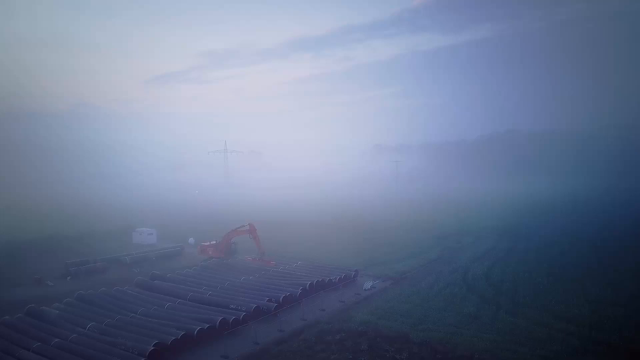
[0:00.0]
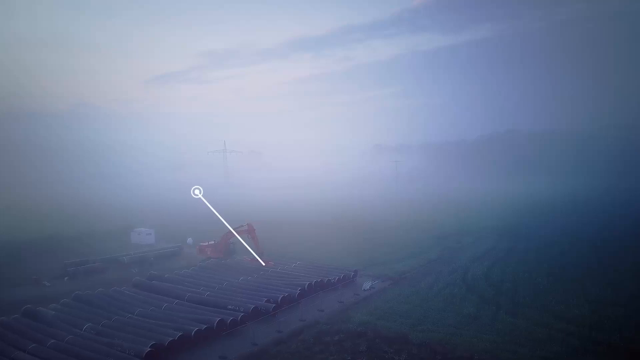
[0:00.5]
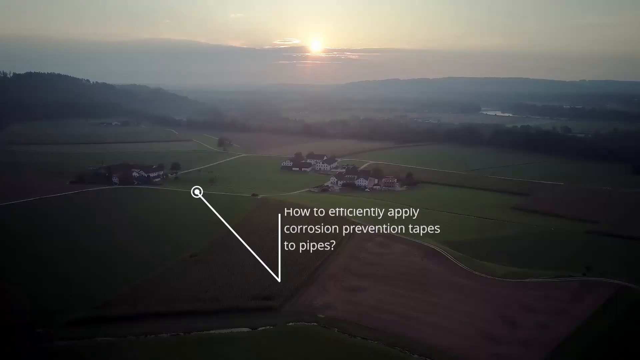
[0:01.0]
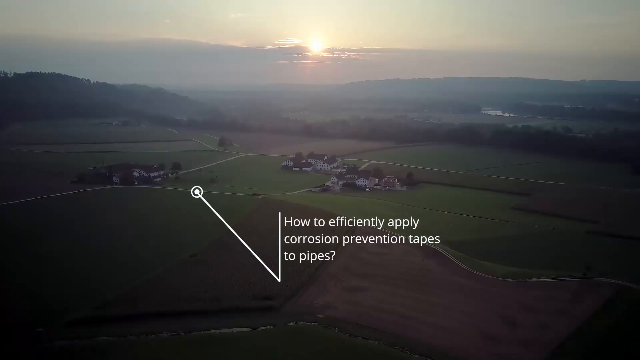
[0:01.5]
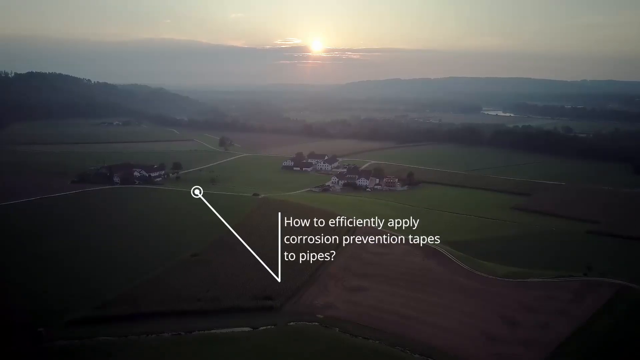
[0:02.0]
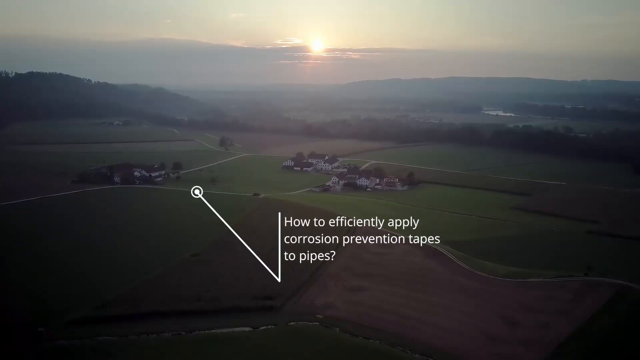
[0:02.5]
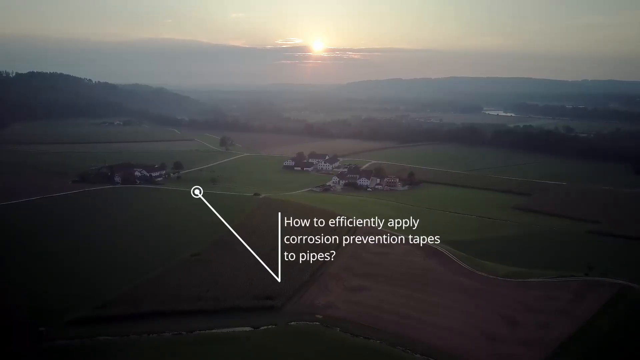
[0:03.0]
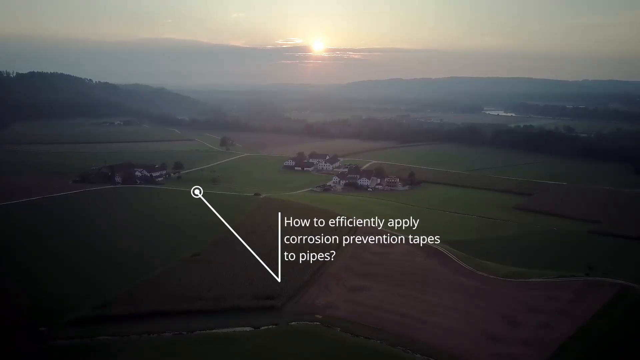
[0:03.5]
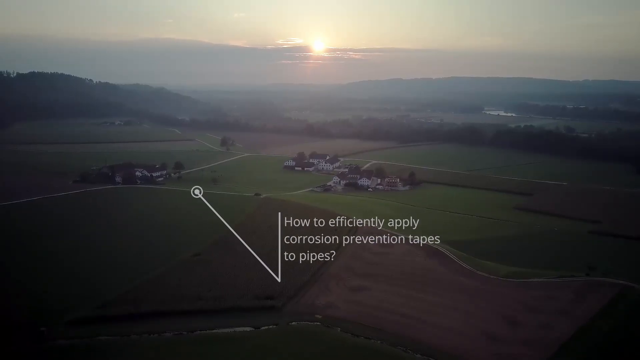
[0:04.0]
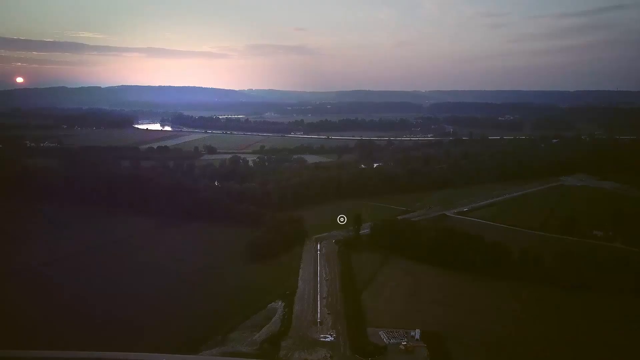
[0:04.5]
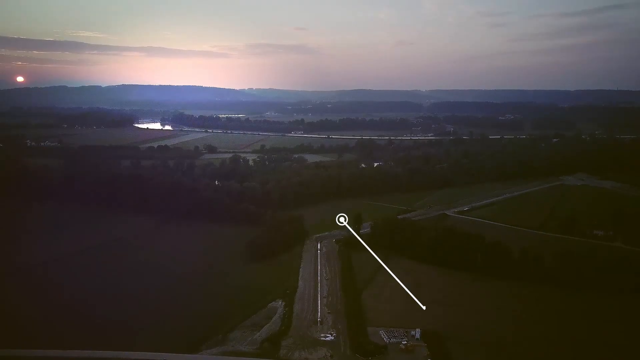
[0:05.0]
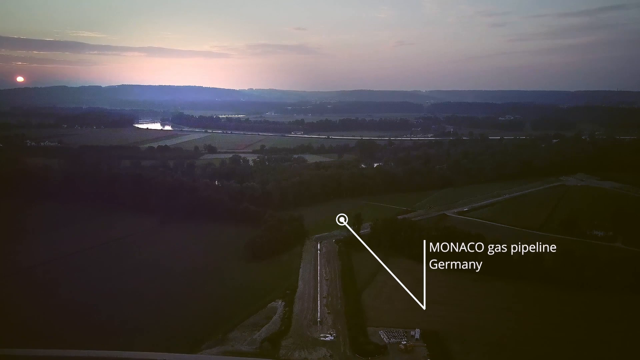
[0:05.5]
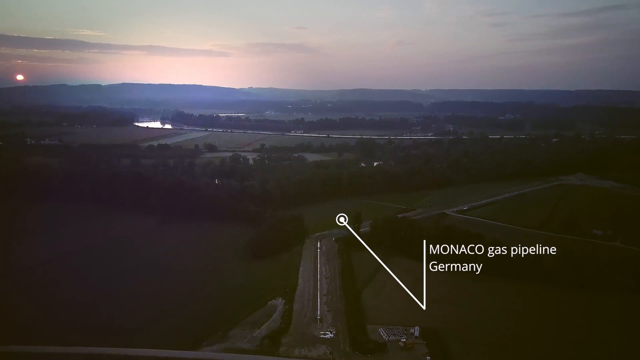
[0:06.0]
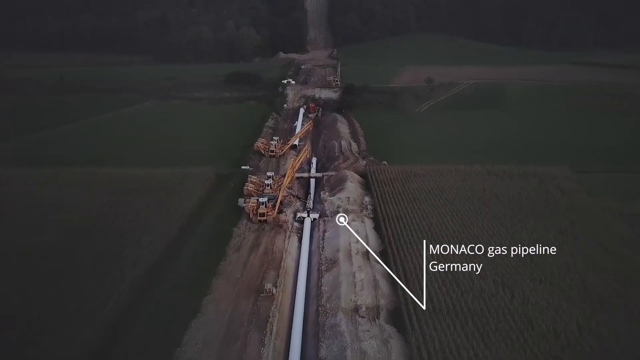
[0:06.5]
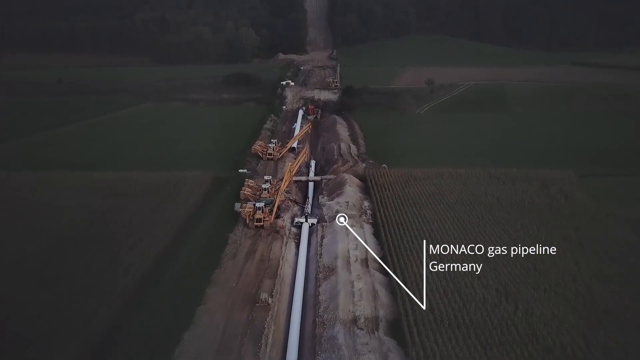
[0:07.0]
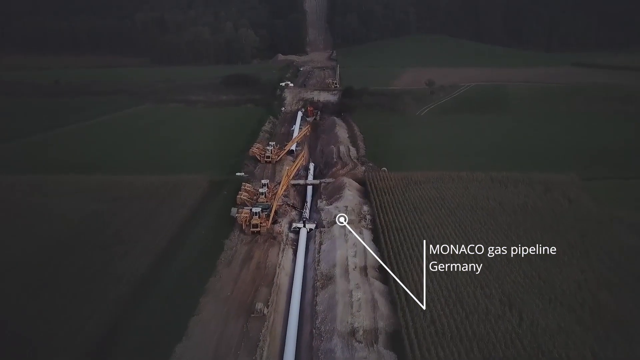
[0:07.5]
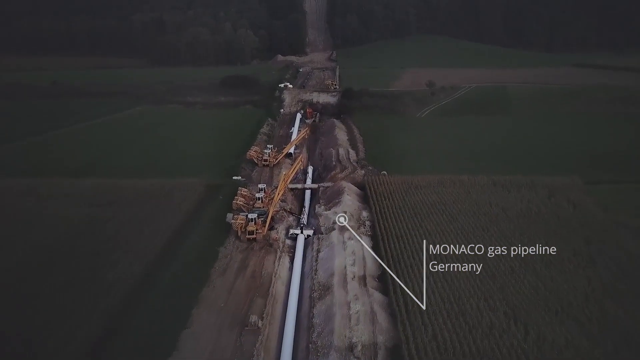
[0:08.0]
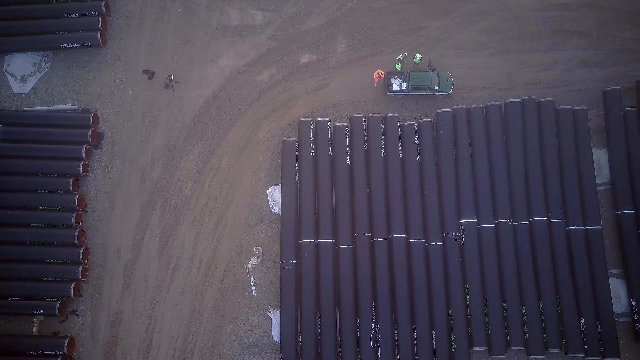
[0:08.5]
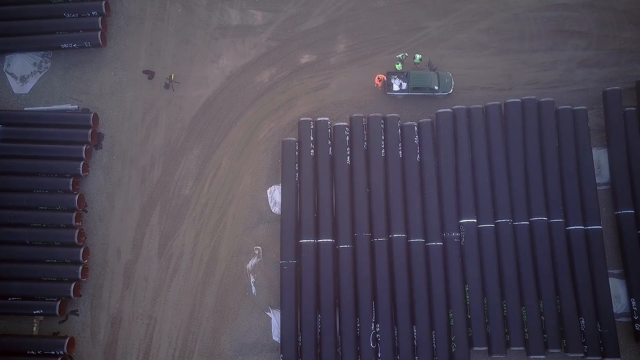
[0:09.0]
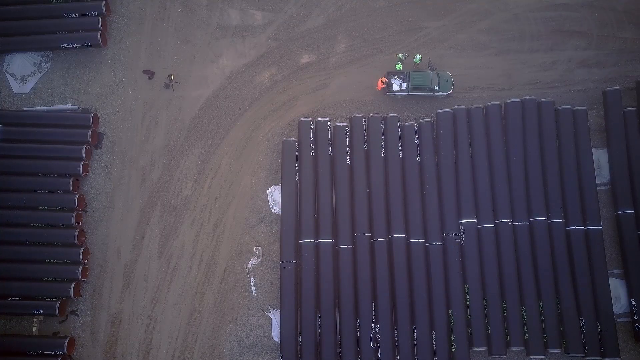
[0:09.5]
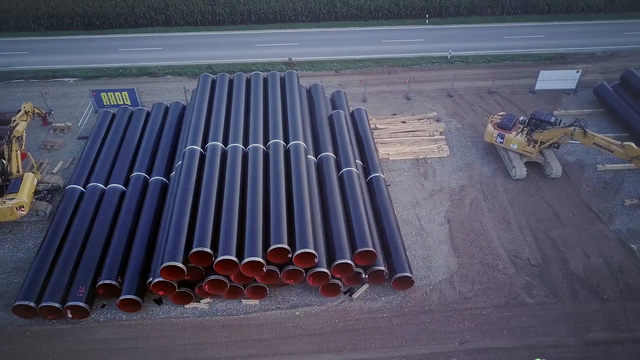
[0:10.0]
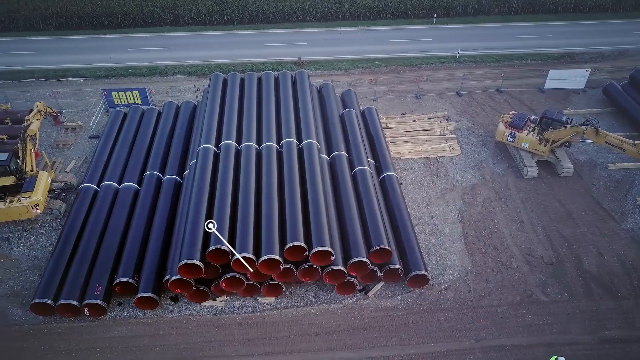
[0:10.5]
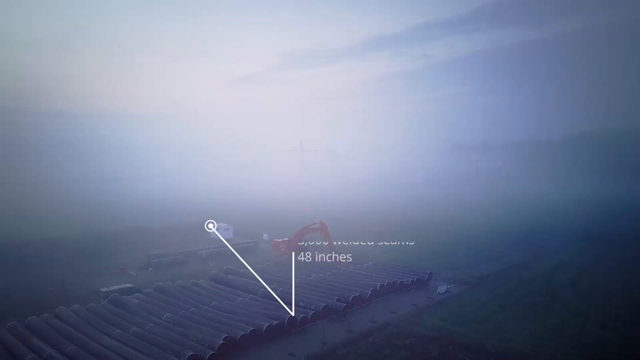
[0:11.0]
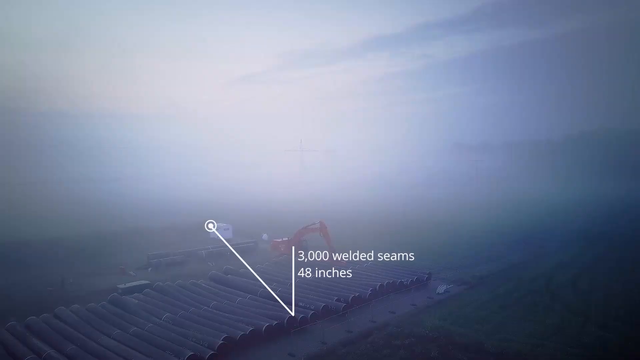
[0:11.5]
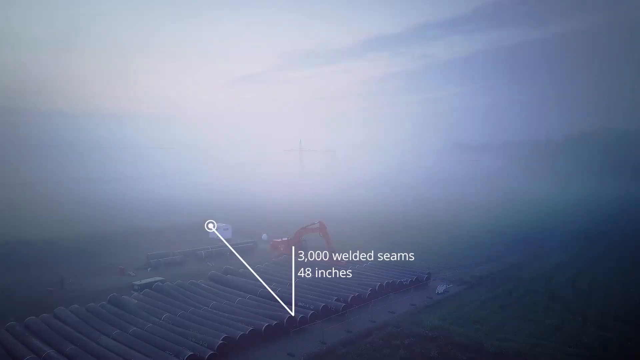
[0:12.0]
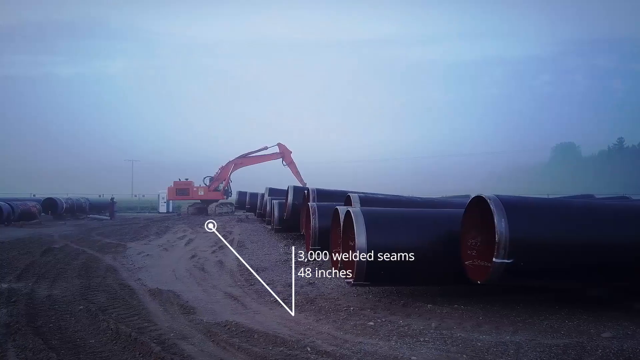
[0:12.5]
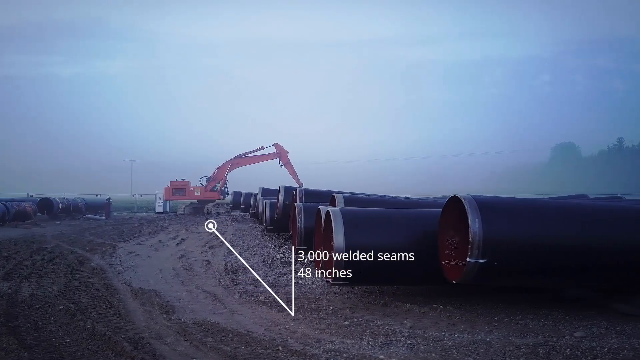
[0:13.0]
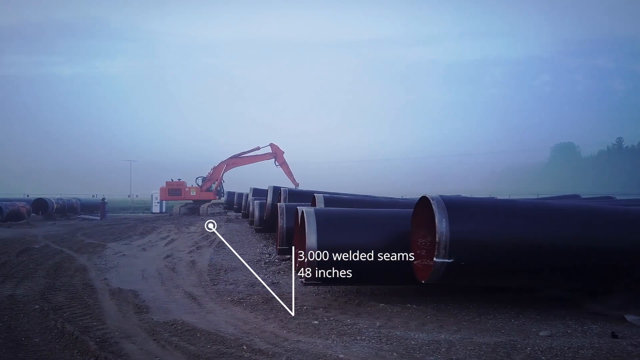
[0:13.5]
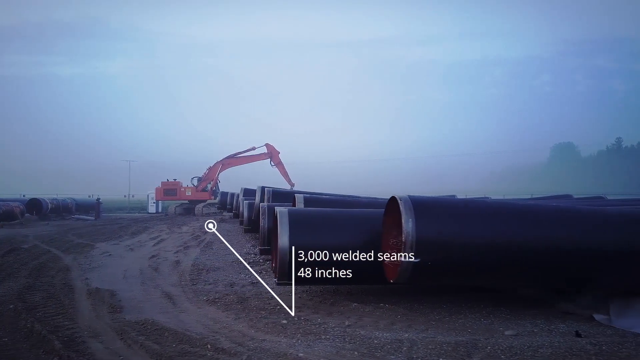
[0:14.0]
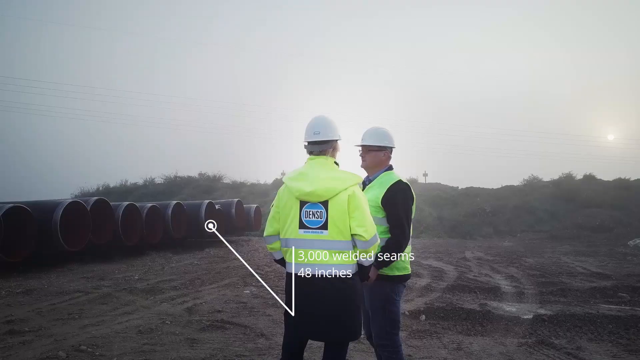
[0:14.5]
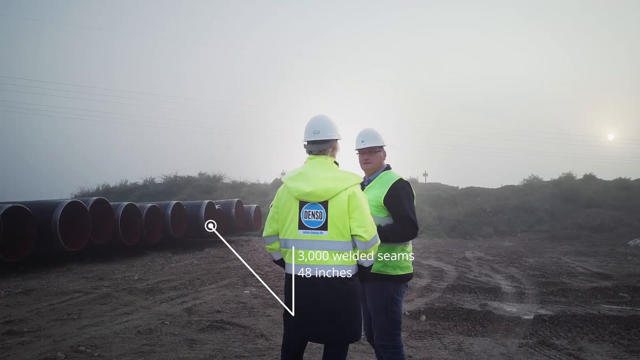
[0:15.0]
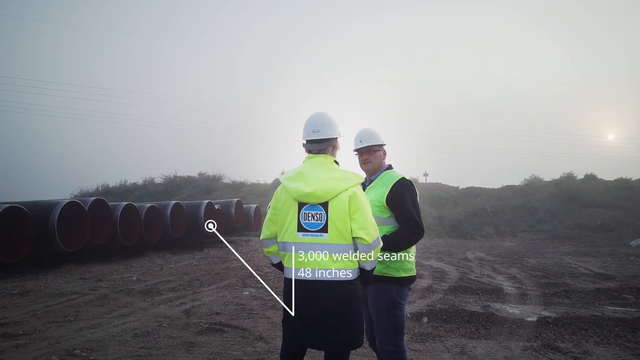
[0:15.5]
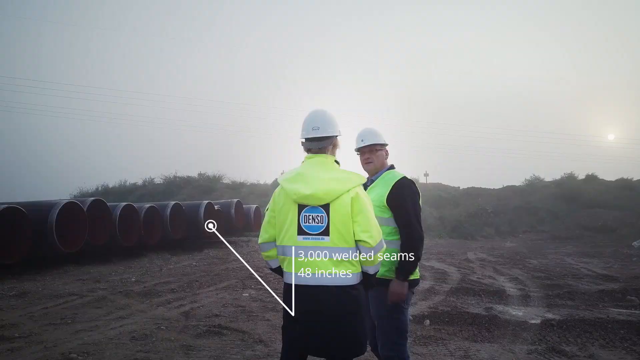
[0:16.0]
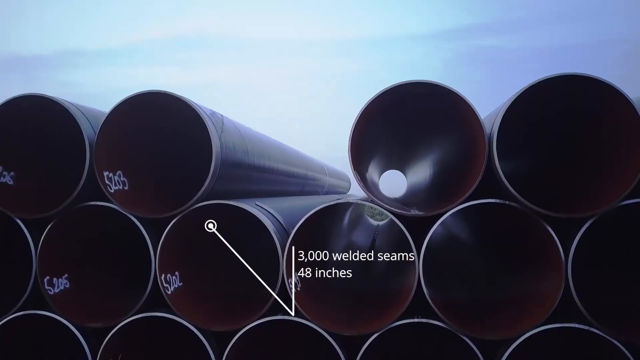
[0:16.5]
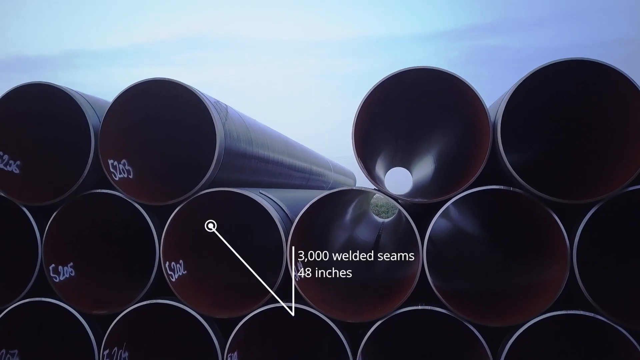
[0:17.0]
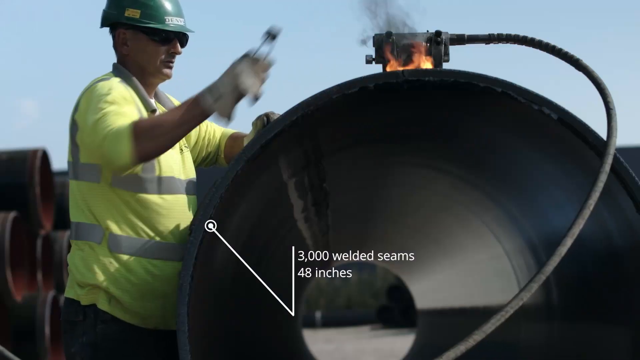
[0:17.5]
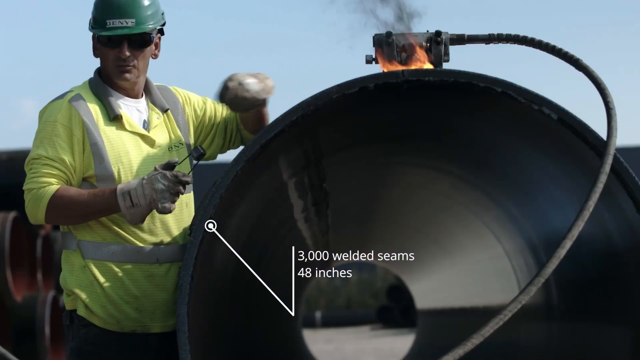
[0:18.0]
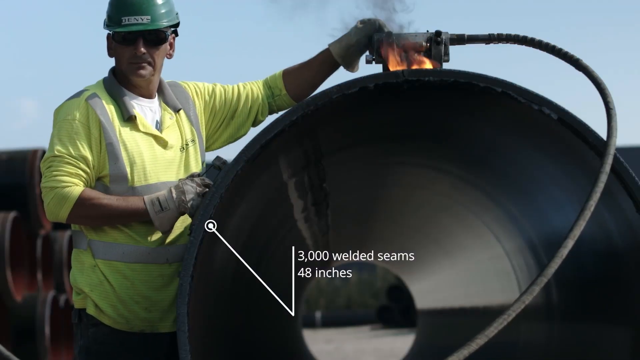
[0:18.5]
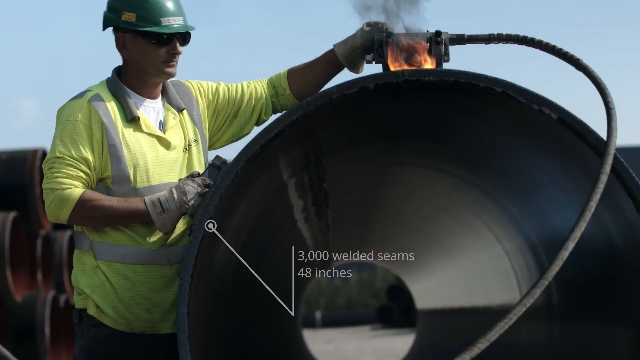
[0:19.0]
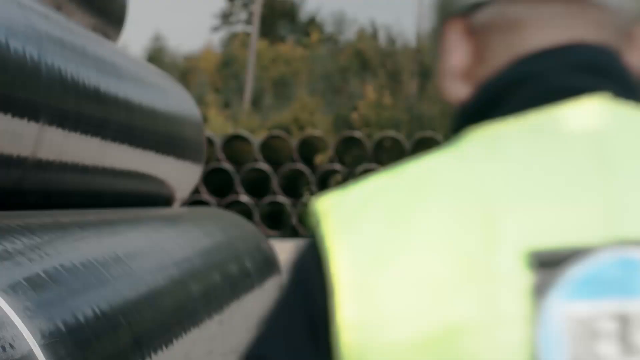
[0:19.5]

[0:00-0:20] A countryside landscape appears, with a mark on a computer display showing where a pipeline would be laid; a dot marks a location and diagram lines are drawn to show where the pipeline would go. In the countryside, a machine is being operated; it looks like a red machine with a cherry picker, apparently the type that would dig for the pipeline. Text reads "how to efficiently apply corrosion prevention tapes to pipelines." Open land in the countryside is shown as the place where the method would be applied. Text reads "Monaco Gas Pipeline," and then a construction yard appears with piles of pipes stacked one on top of the other. Information is given about how many seams would be used and how many inches. Men in hard hats are talking. In one shot, something to do with the pipeline is being heated, with actual flames visible.